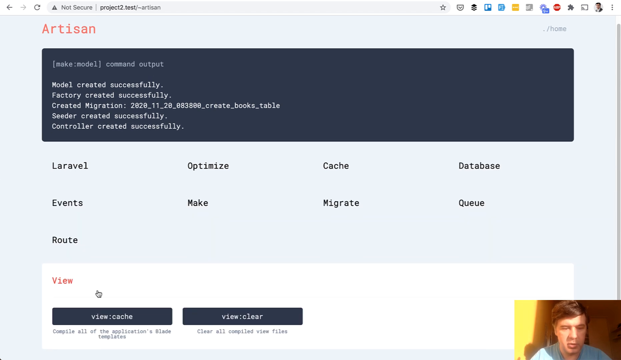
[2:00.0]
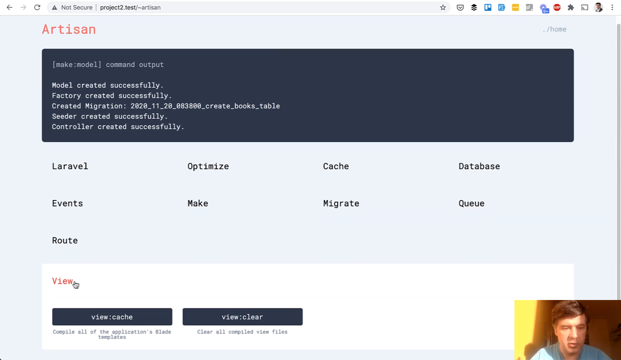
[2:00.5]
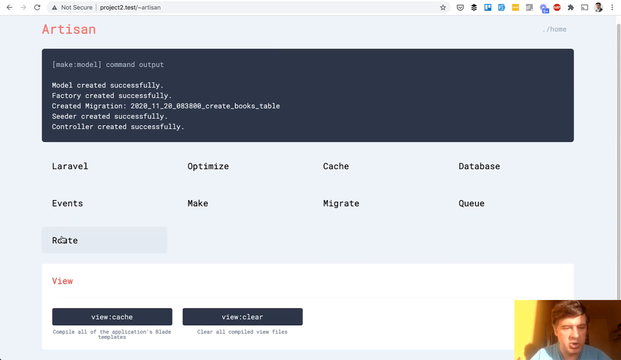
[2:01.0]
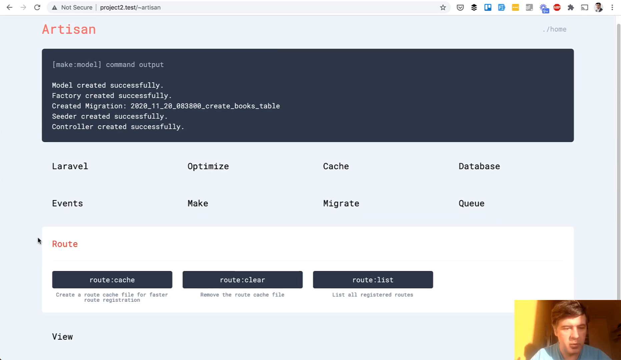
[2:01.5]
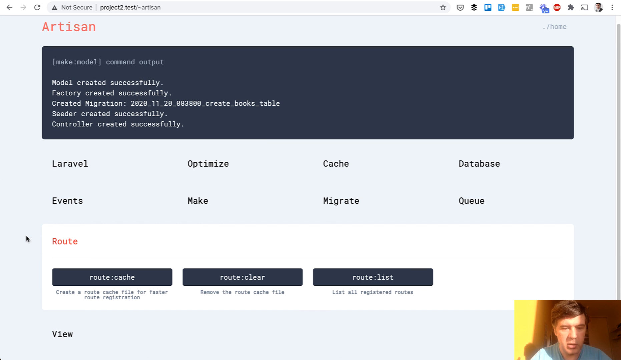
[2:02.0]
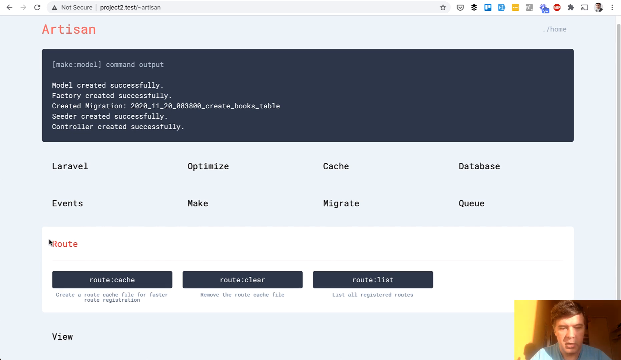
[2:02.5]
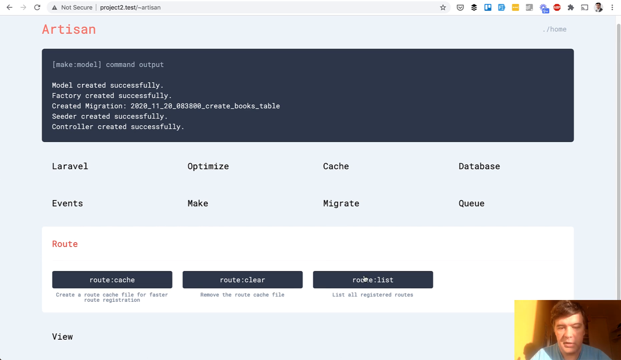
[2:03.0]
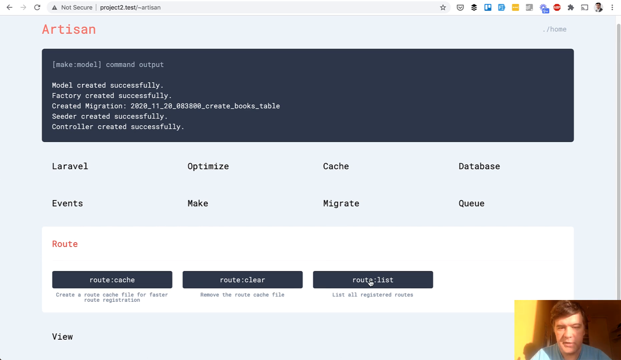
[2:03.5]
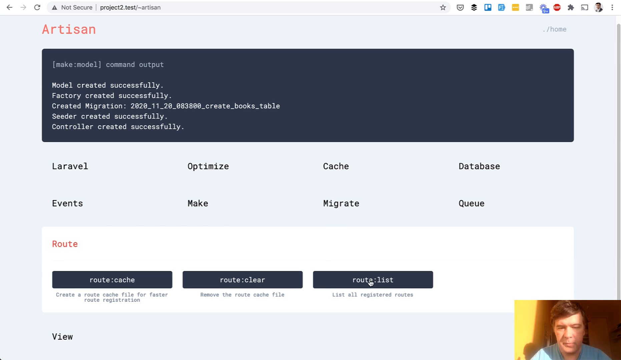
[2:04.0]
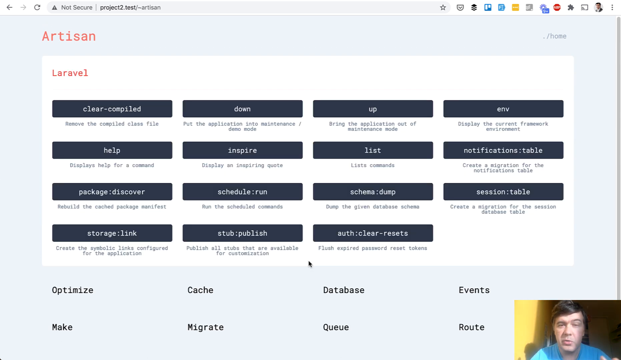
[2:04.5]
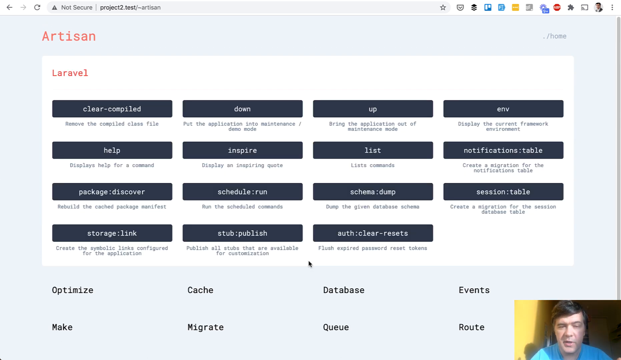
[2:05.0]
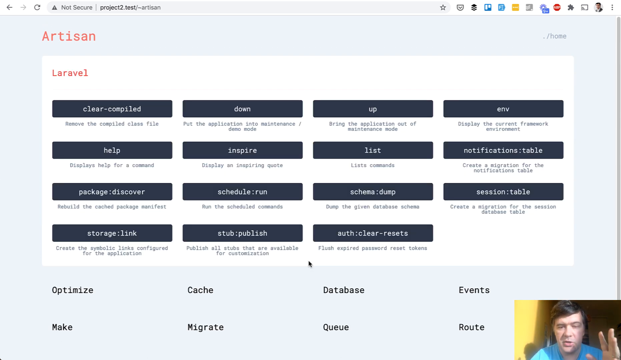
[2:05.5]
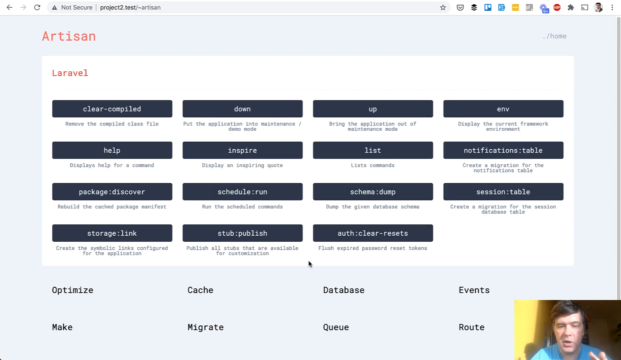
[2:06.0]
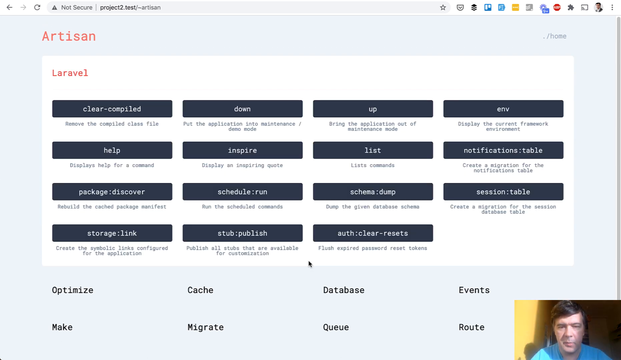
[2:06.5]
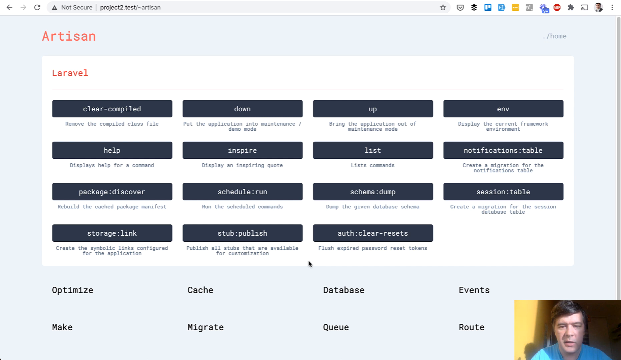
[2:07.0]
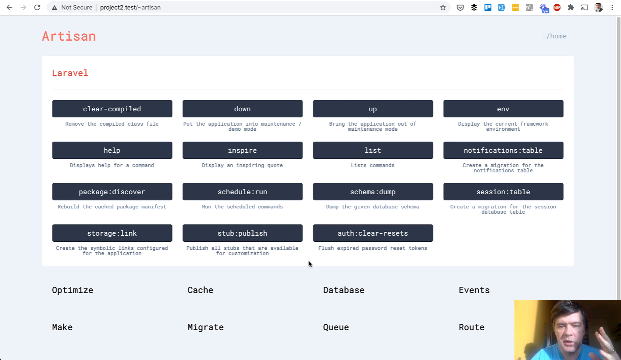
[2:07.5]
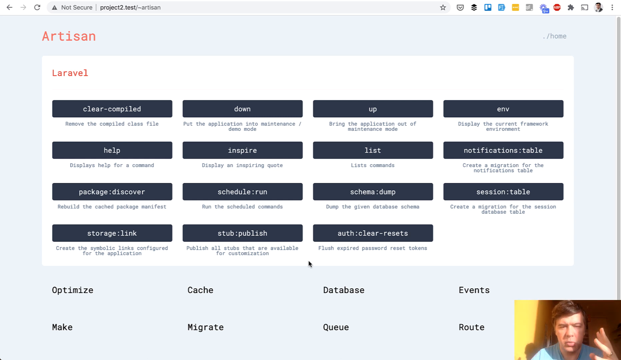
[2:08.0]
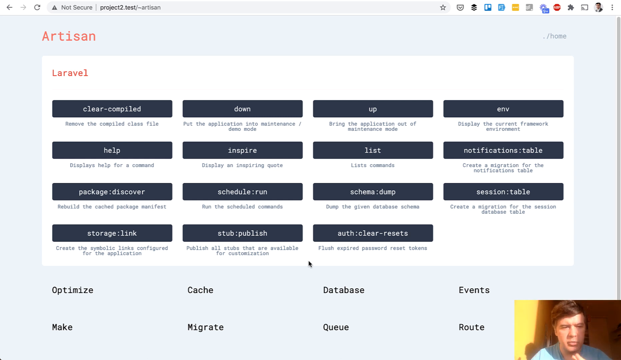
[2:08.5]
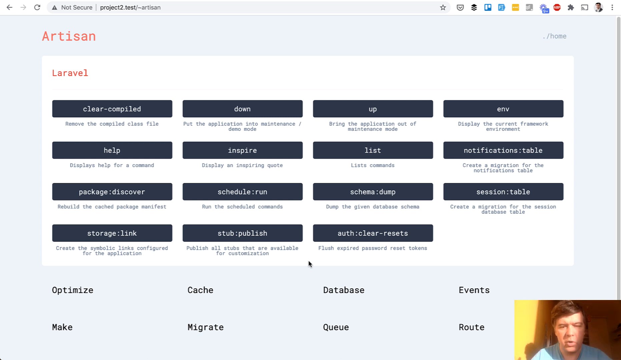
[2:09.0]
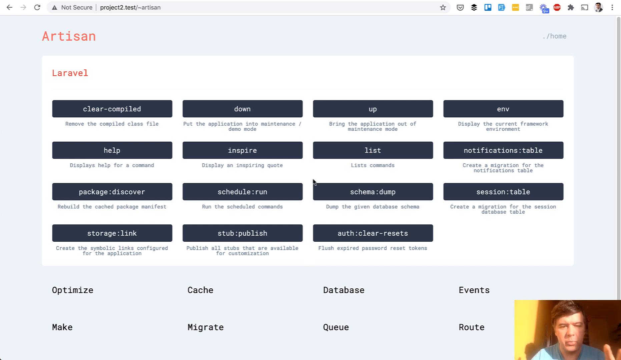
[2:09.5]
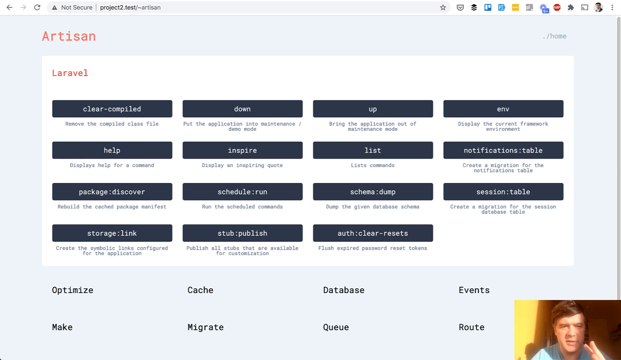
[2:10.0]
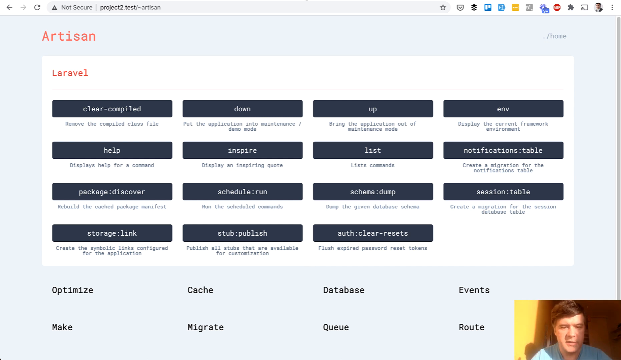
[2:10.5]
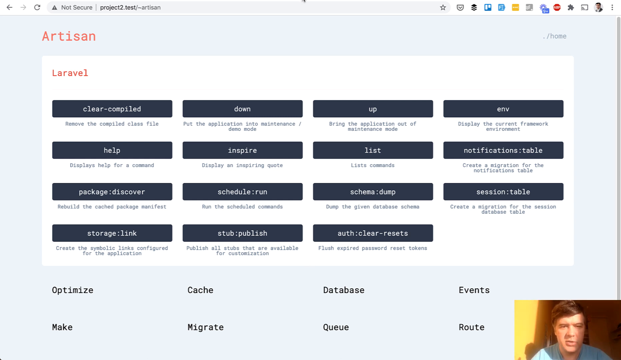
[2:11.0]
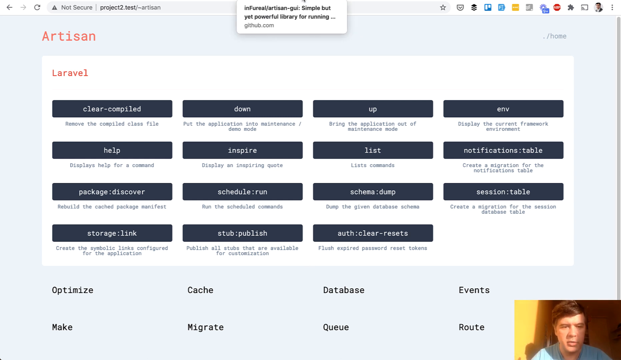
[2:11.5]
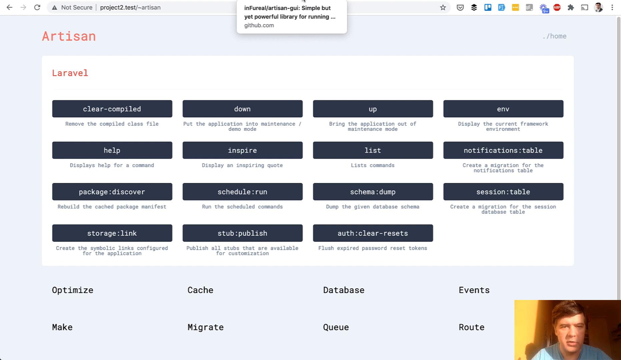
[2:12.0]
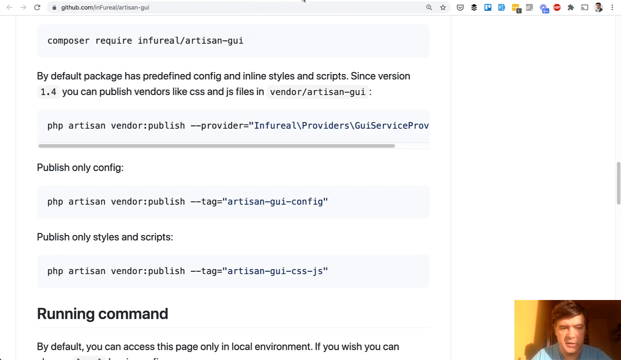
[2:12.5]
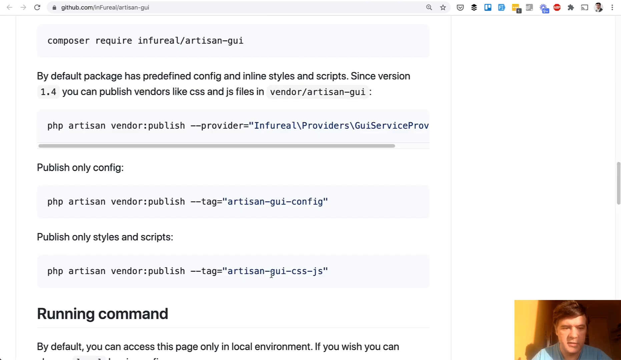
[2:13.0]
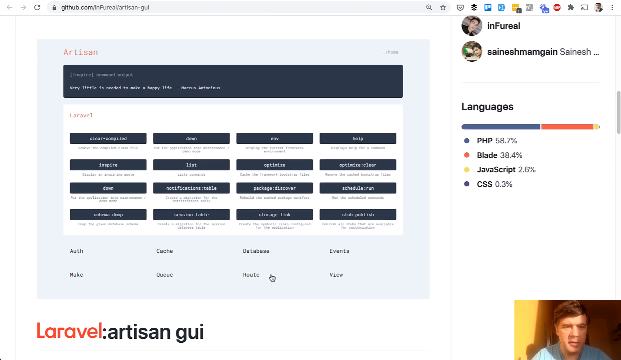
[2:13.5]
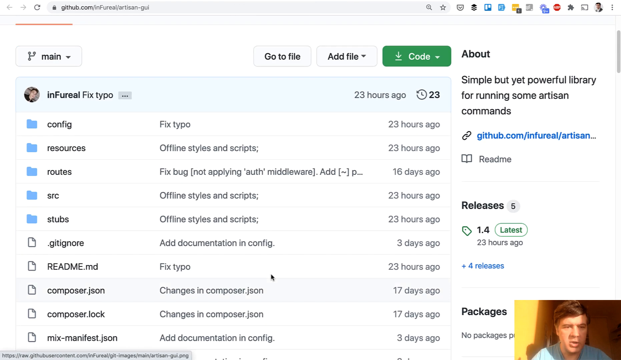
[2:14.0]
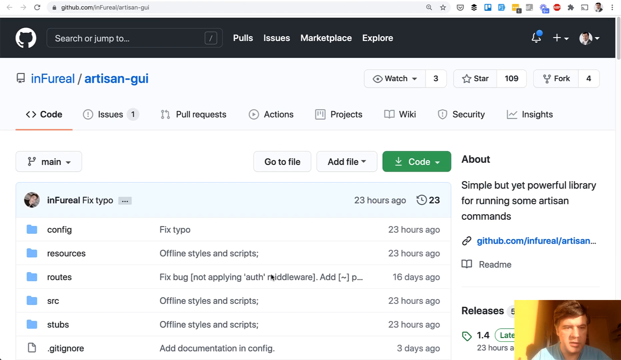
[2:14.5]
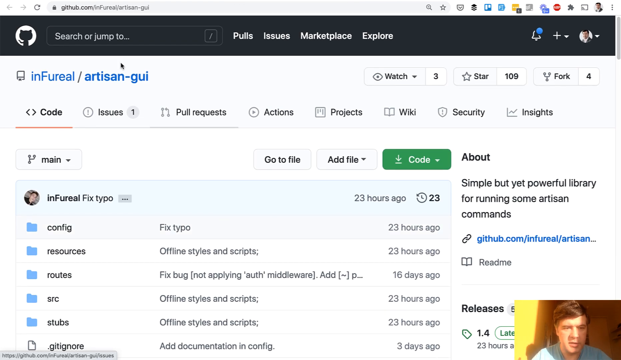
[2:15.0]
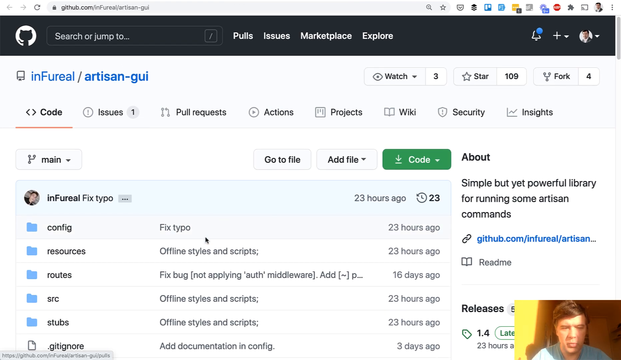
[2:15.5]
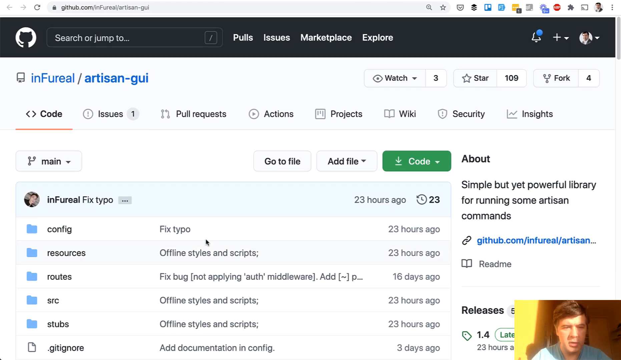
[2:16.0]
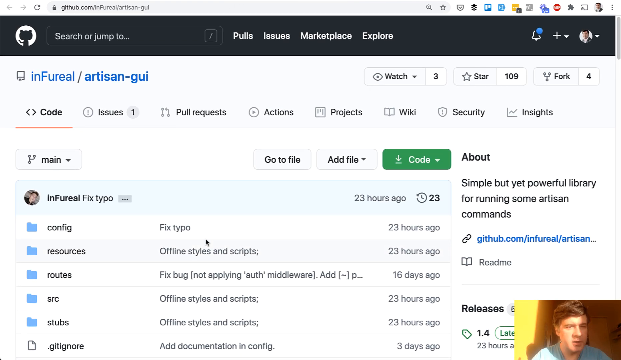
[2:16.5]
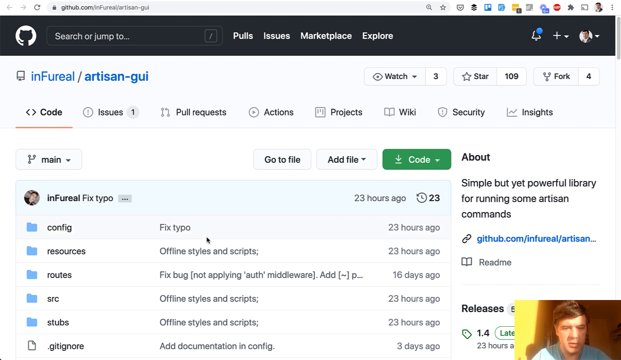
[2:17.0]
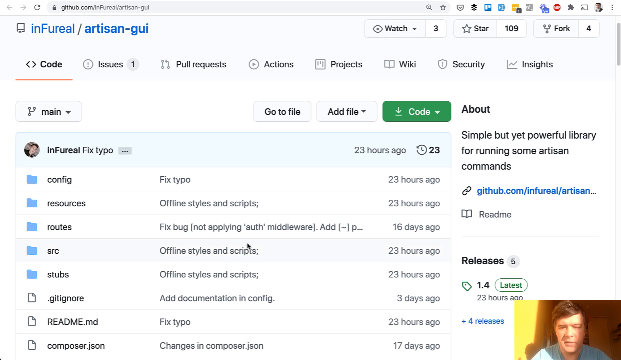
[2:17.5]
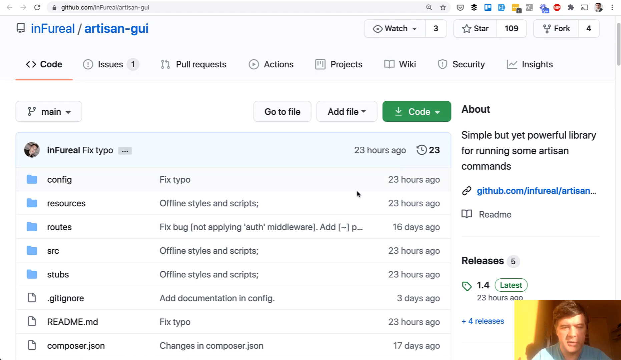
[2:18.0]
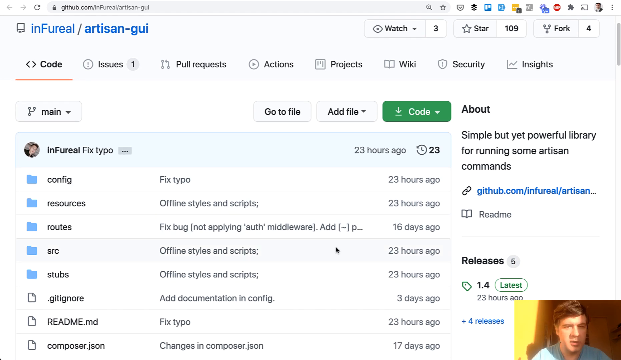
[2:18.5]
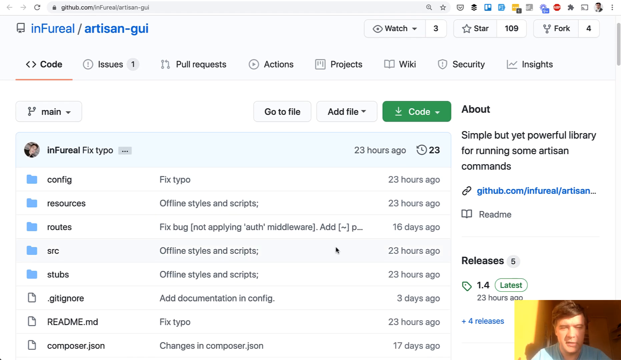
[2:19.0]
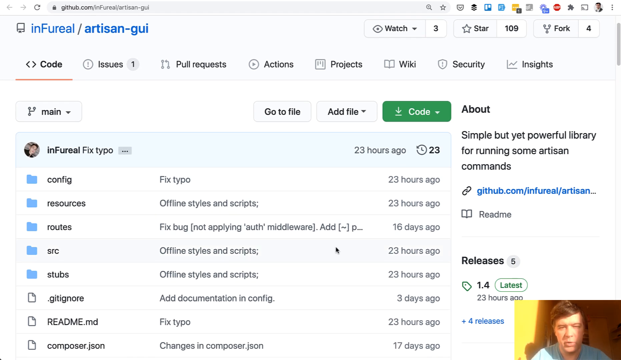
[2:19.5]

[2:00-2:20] The man is on the website project2.test, on the artisan page, appearing at the bottom of the screen: a Caucasian man with light coming into his room, showing it is daytime. He hits a button called "route," which shows "route cache," "route clear" and "route list." The screen shows "artisan" and "Laravel," along with "clear," "compile," "down" and "up." Scrolling to the top of the page reveals items such as "config," "resources," "routes" and "fixed typo," along with "artisan-gui" and text about ways to run artisan commands.